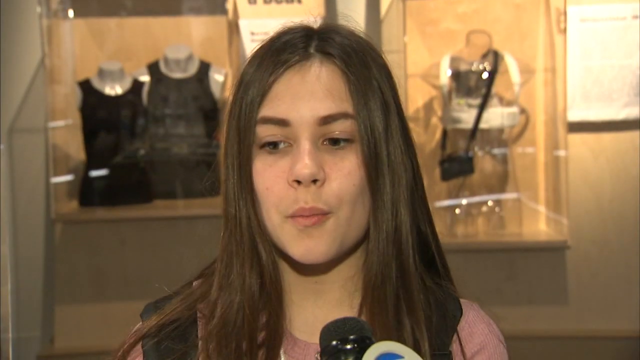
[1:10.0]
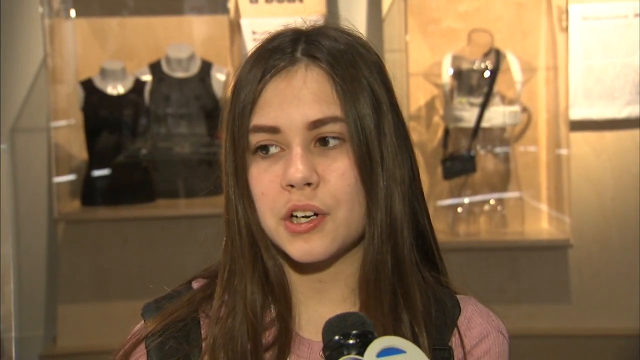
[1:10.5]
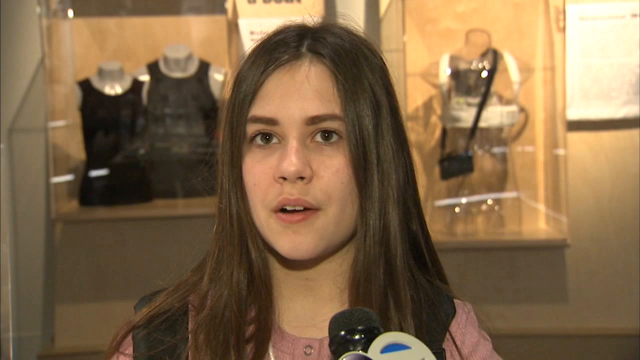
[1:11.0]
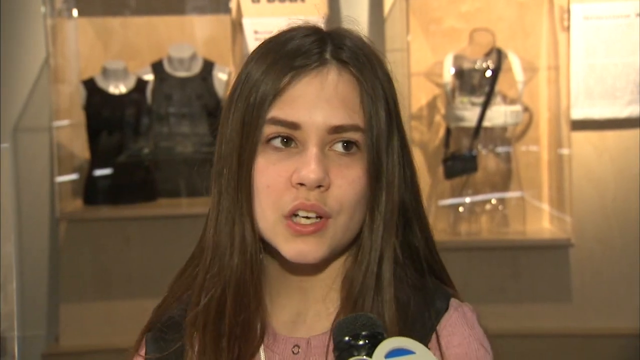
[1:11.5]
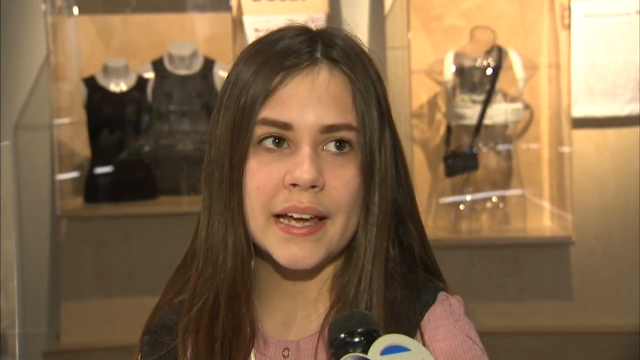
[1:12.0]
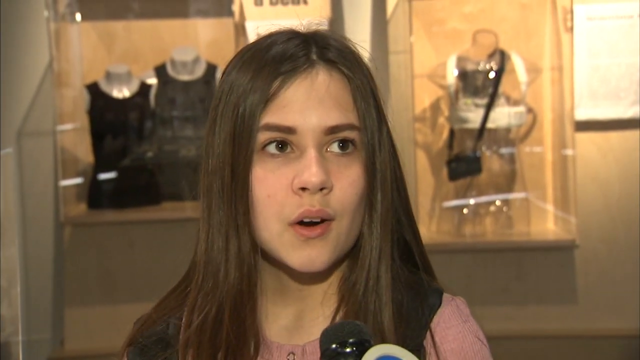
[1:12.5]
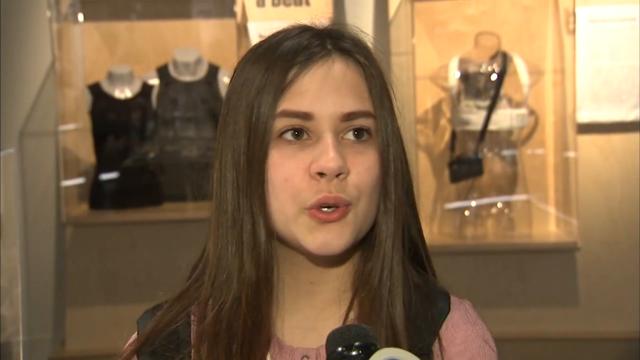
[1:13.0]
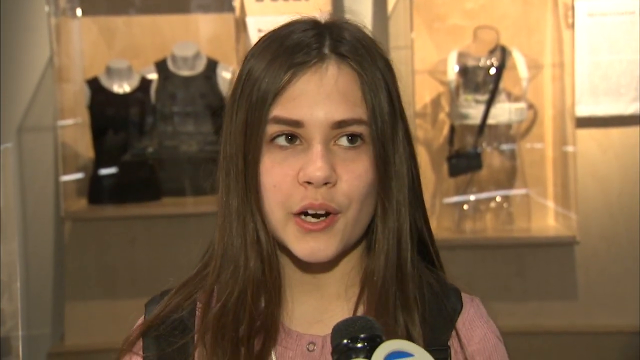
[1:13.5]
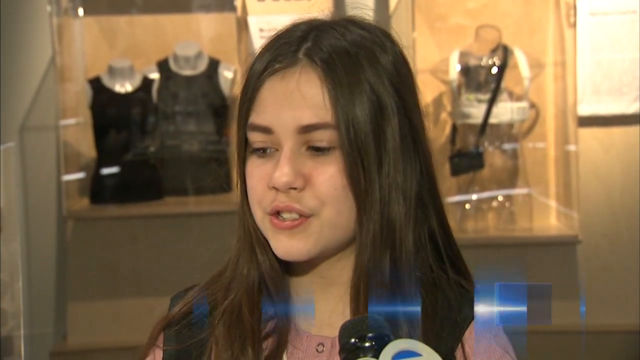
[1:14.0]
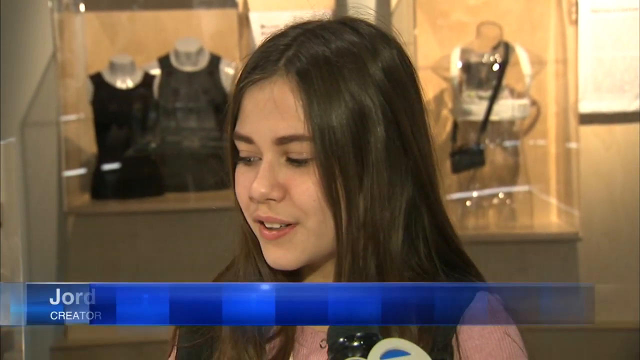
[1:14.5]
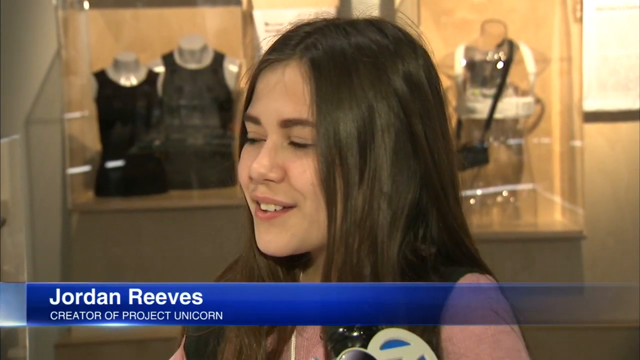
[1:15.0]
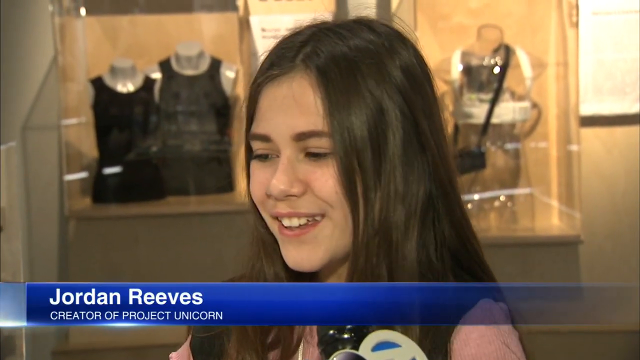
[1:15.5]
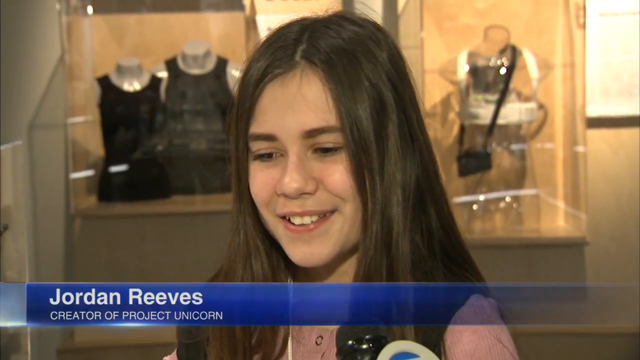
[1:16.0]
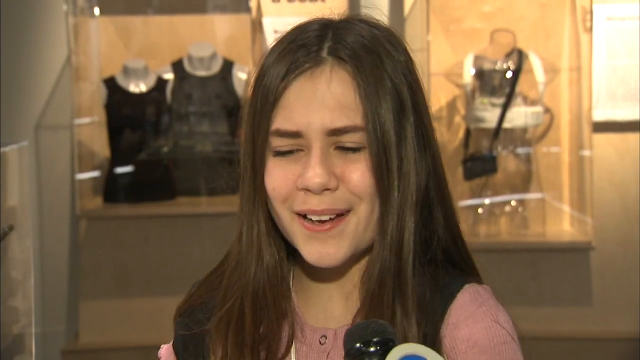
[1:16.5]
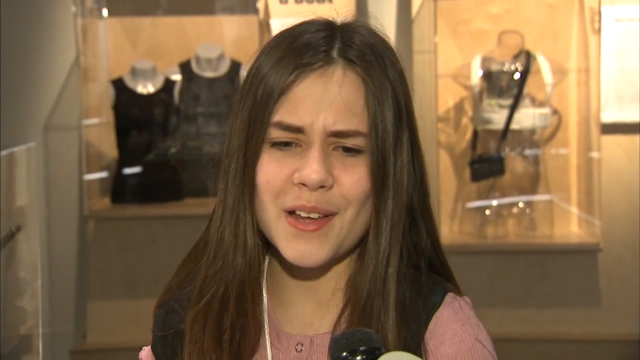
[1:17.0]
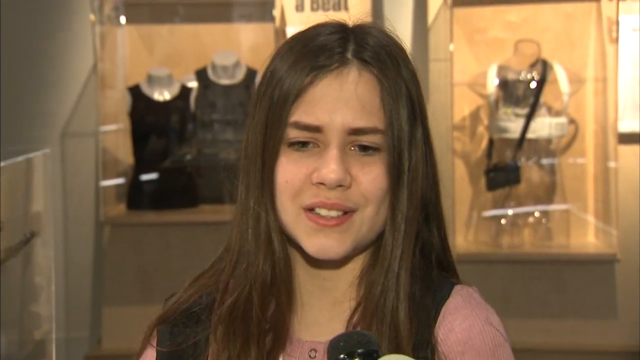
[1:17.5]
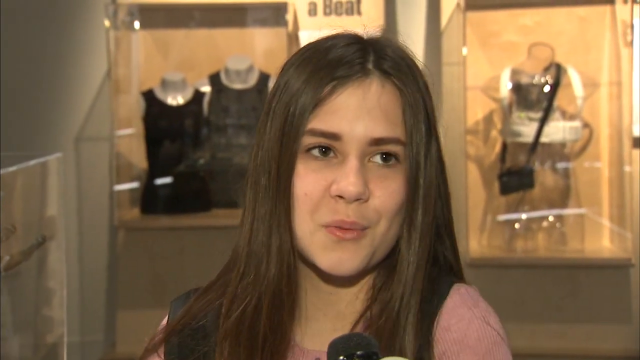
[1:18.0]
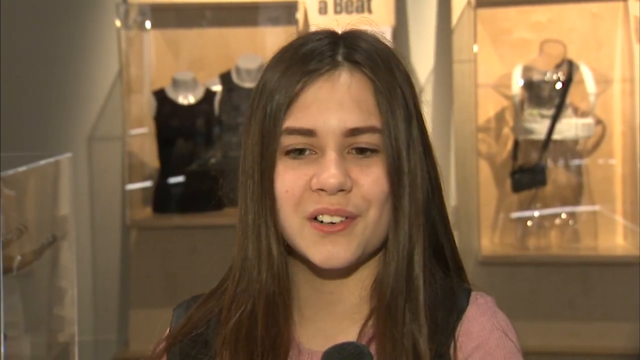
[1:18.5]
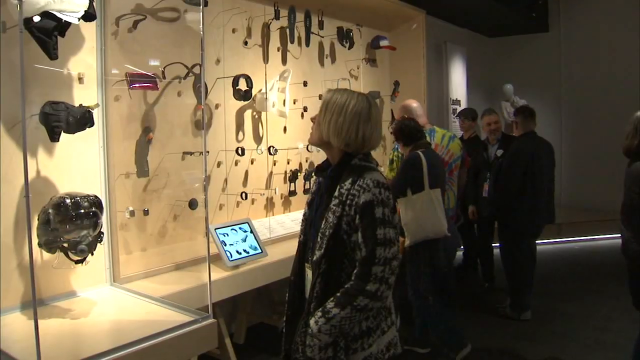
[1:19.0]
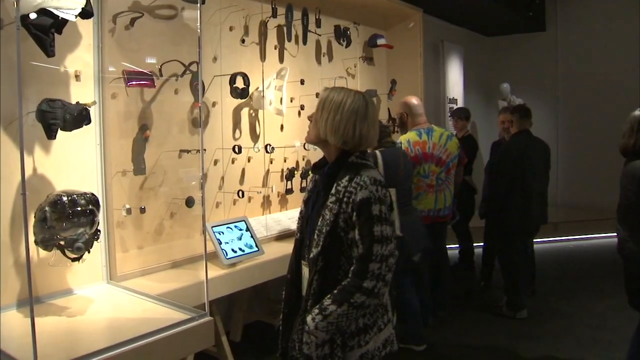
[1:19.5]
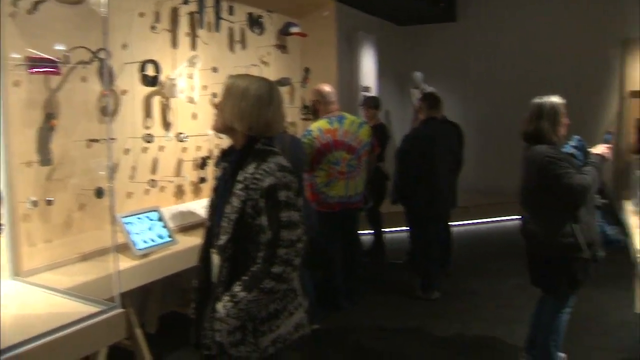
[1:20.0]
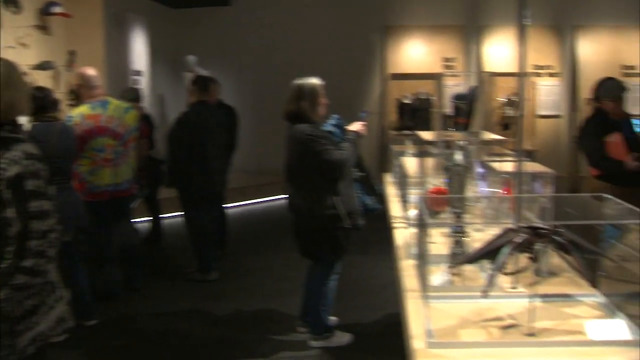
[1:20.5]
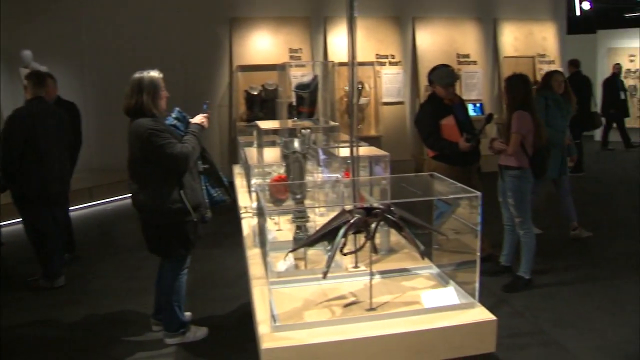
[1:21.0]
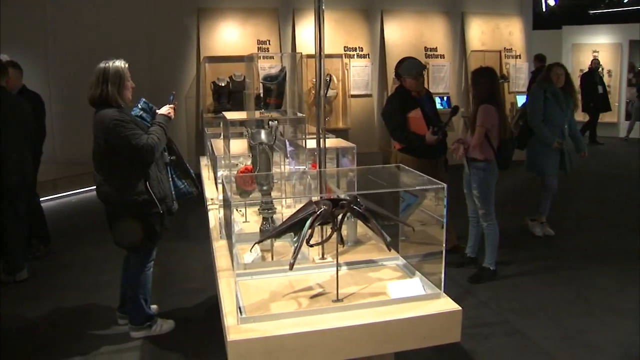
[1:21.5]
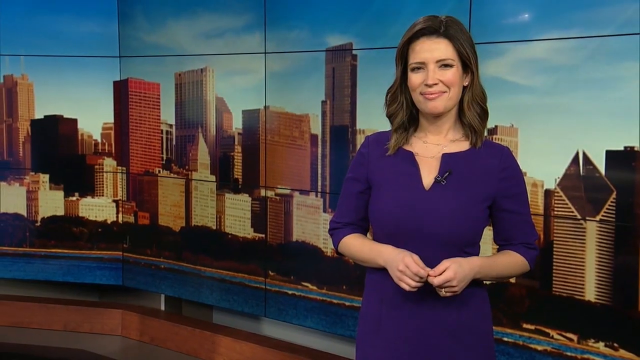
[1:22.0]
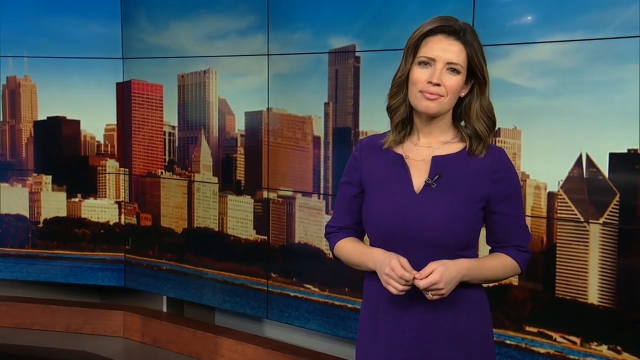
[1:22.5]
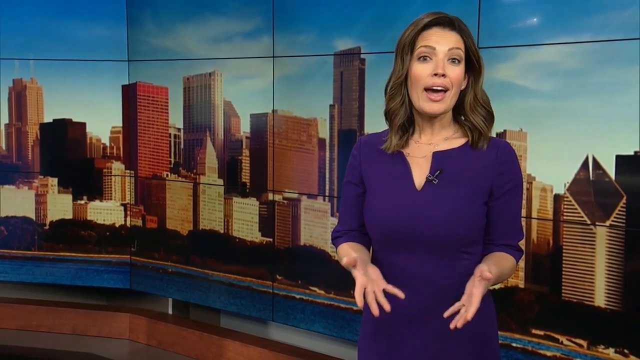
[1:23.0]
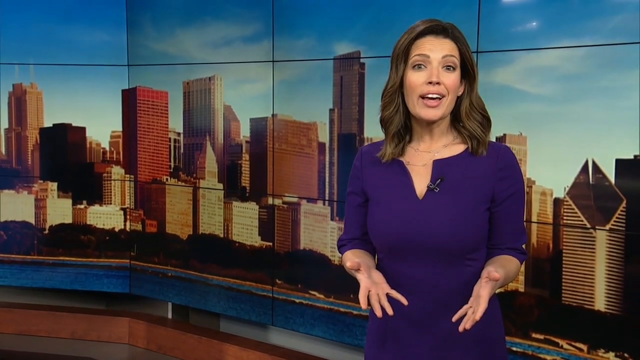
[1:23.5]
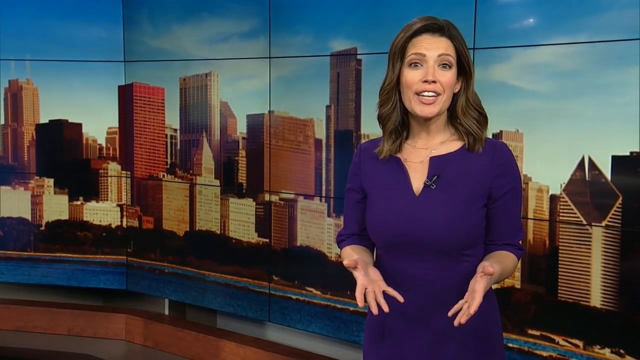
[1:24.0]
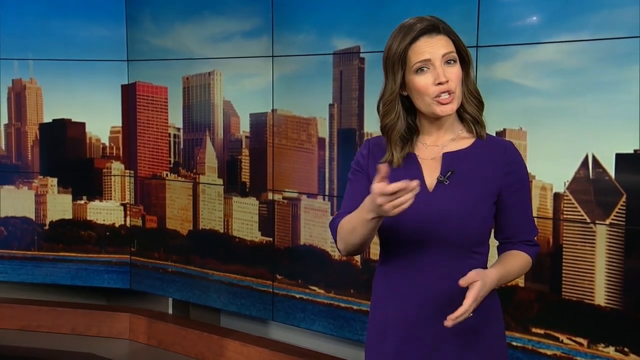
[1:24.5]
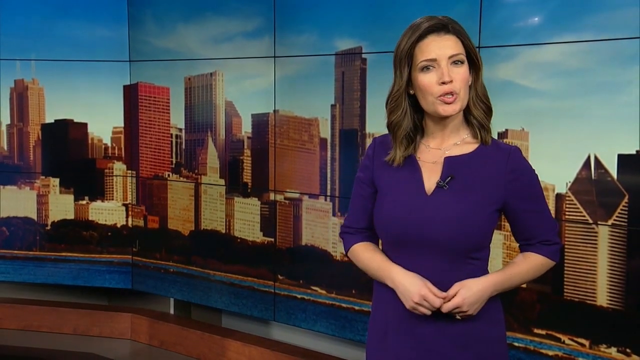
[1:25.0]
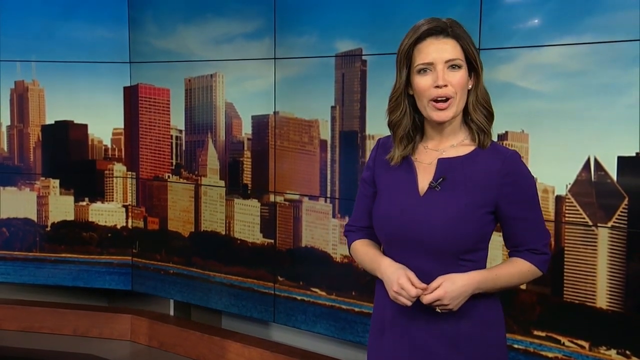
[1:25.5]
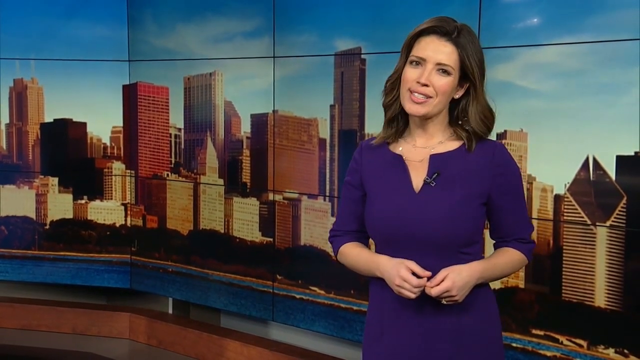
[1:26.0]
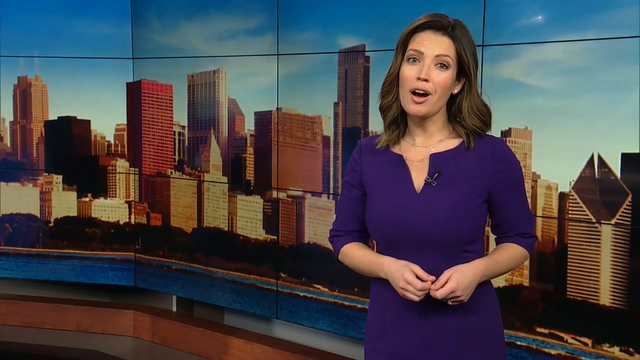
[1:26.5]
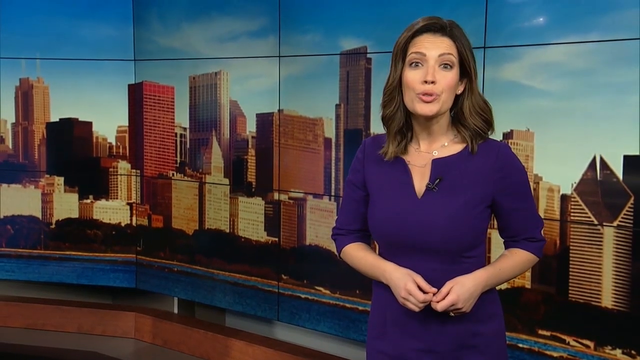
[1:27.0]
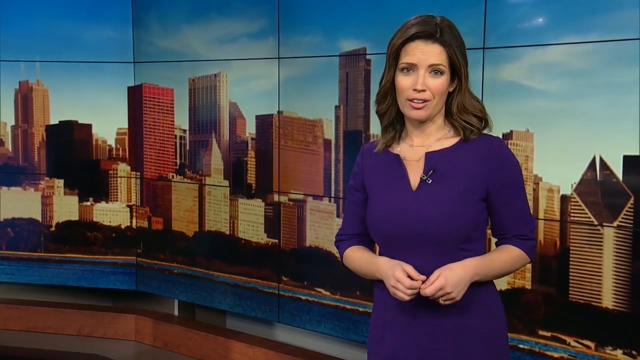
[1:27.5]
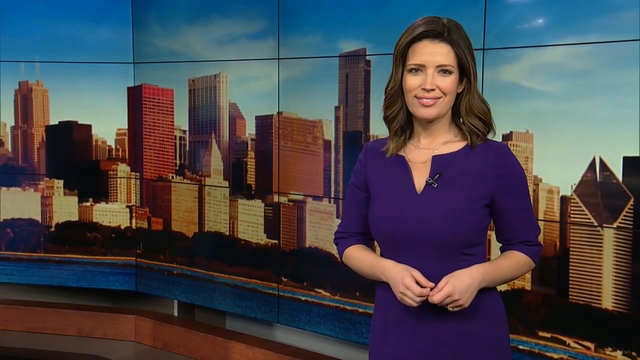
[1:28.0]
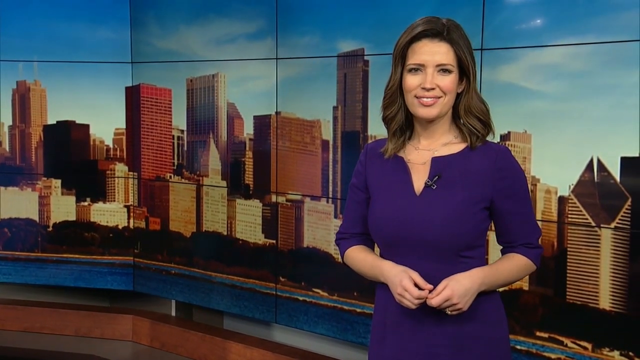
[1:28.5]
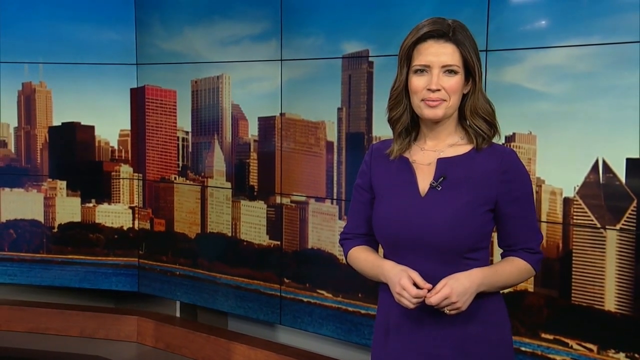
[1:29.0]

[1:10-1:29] The girl talks while being interviewed with a microphone up close to her, with exhibits and displays of outfits and creations behind her. Her name pops up on the bottom of the screen: Jordan Reeves, creator of Project Unicorn. A wide view then pans across the exhibit, showing glass cases and many people walking around viewing the displays. The video ends with an outro of a female news anchor in a news broadcast room, wearing a purple dress and talking to the camera.